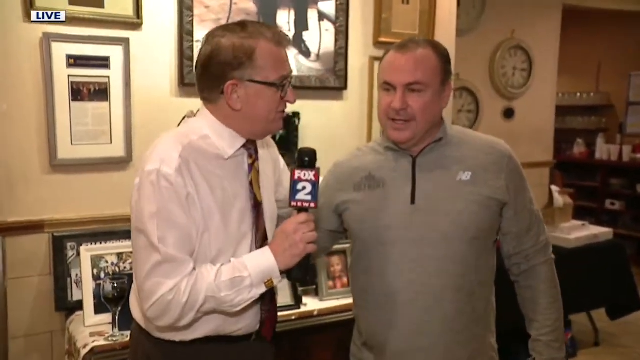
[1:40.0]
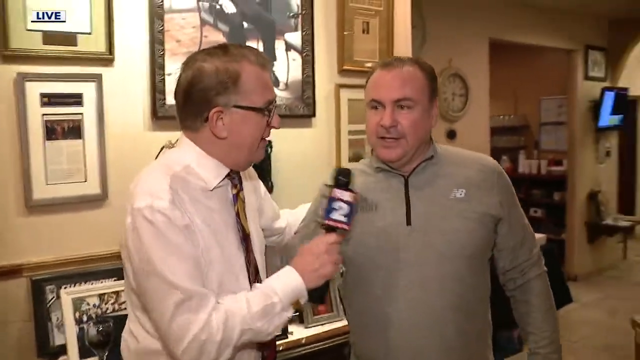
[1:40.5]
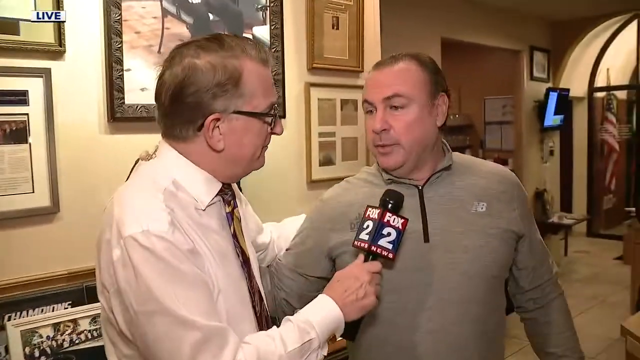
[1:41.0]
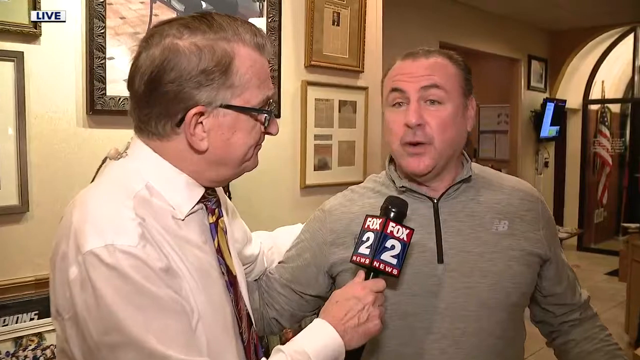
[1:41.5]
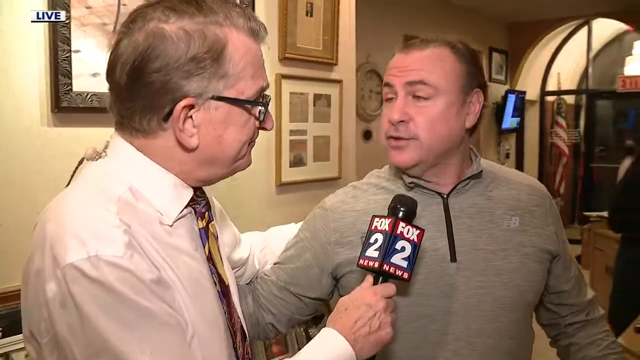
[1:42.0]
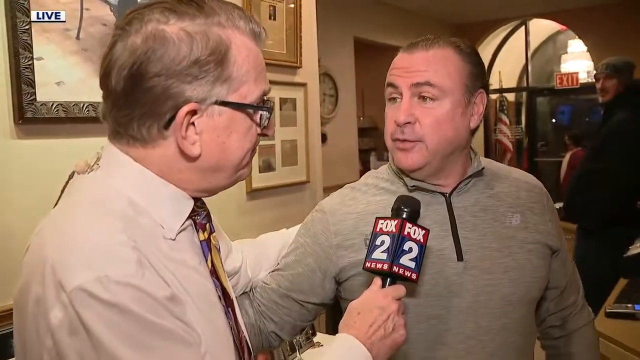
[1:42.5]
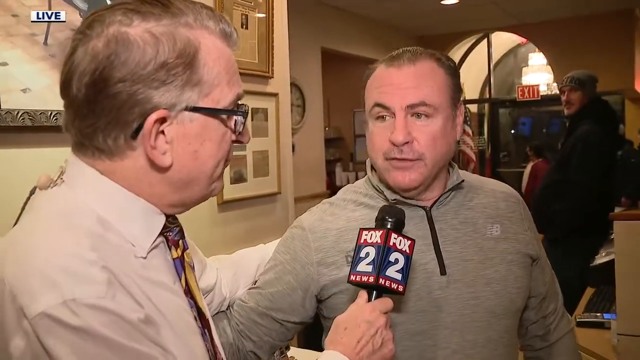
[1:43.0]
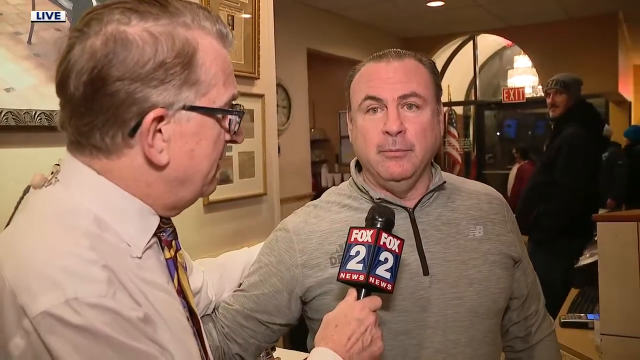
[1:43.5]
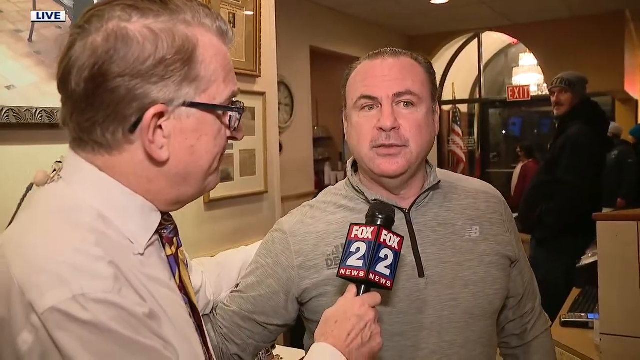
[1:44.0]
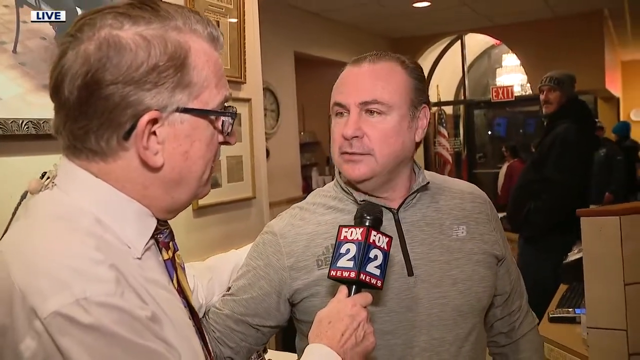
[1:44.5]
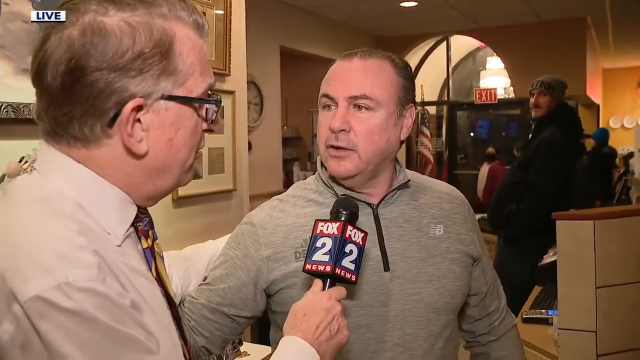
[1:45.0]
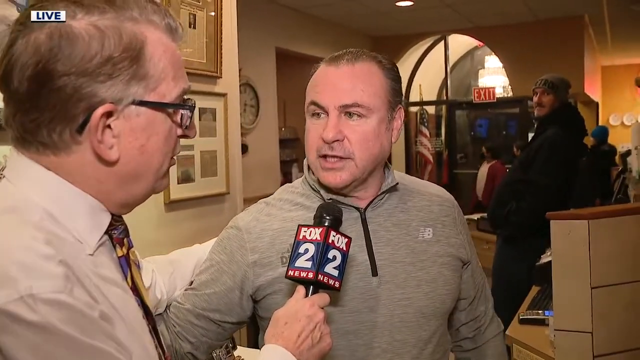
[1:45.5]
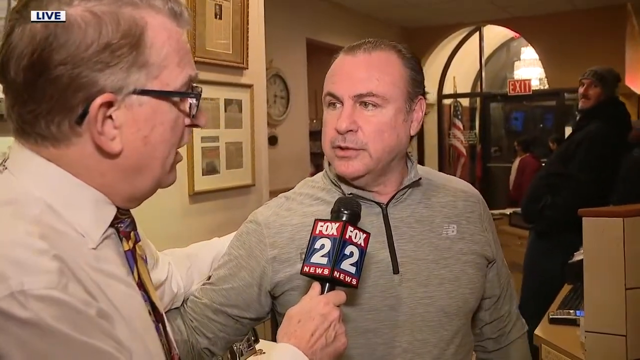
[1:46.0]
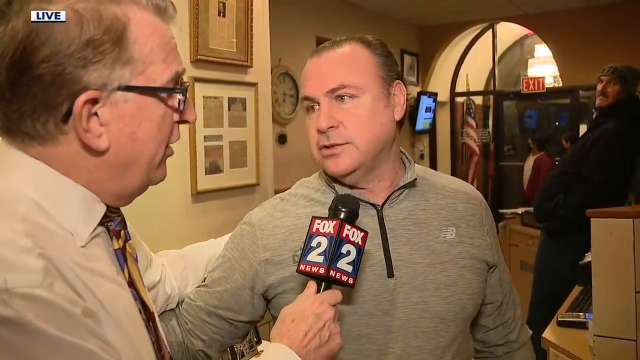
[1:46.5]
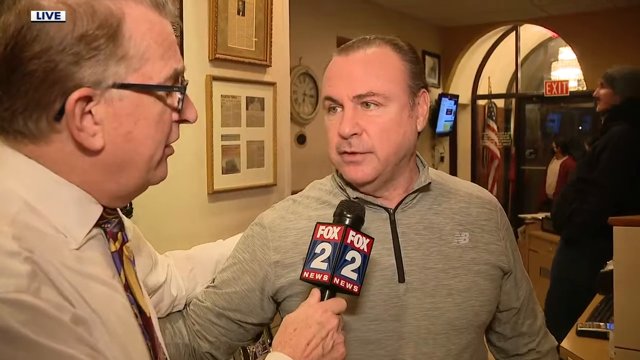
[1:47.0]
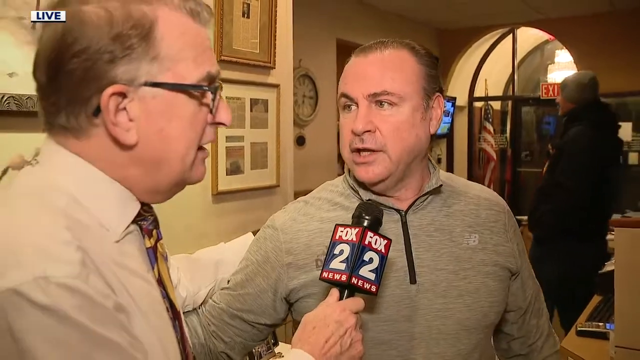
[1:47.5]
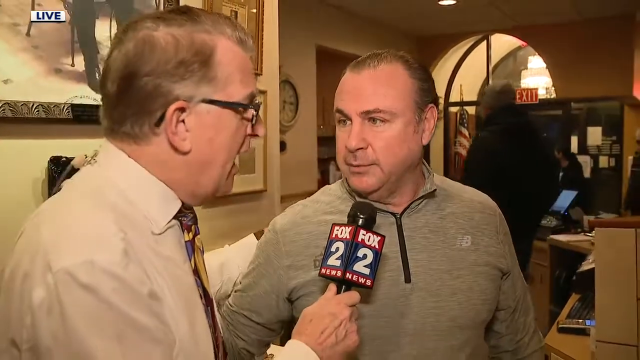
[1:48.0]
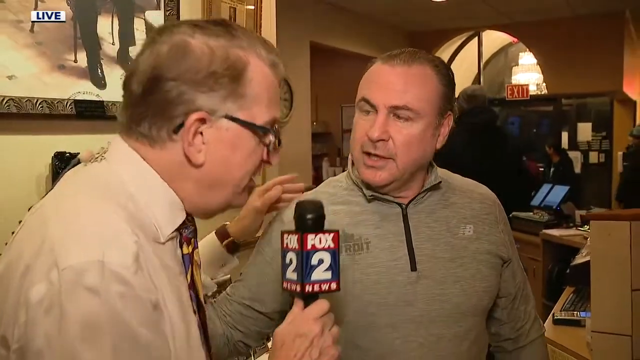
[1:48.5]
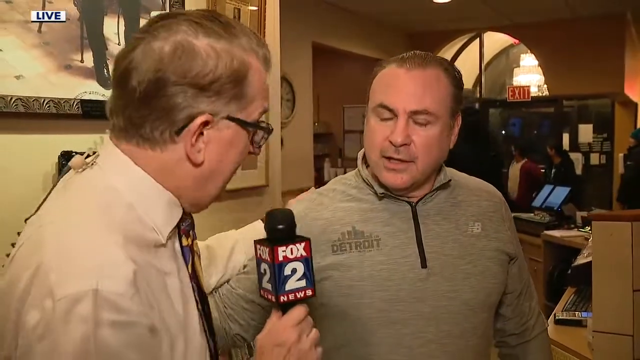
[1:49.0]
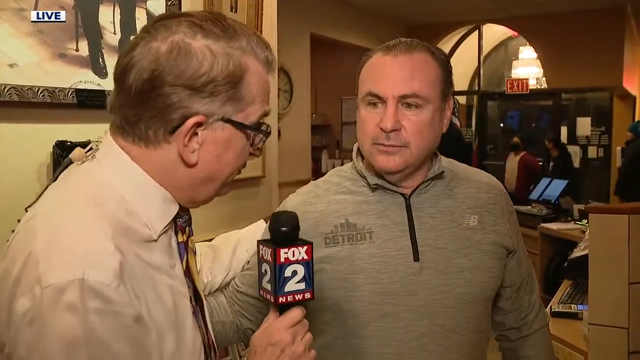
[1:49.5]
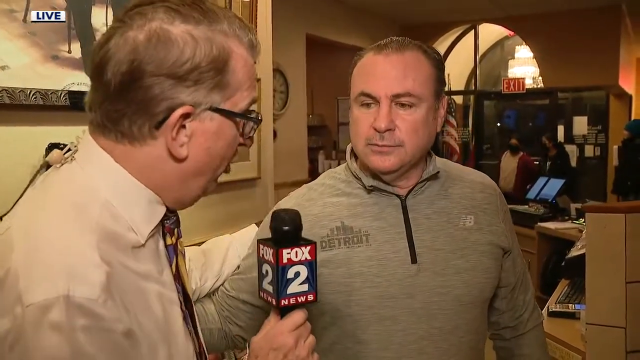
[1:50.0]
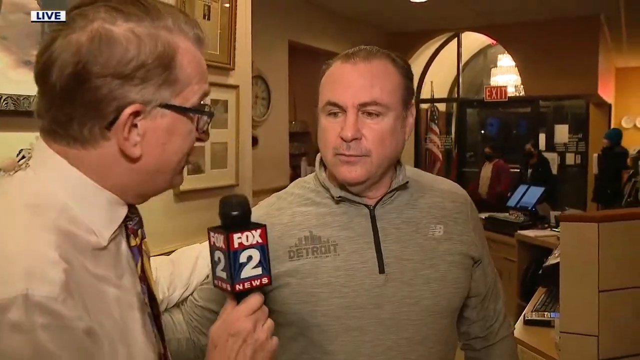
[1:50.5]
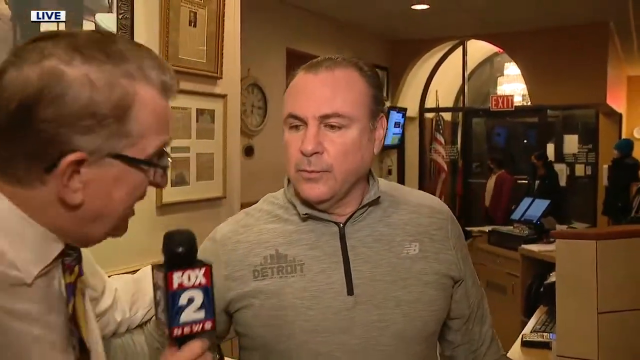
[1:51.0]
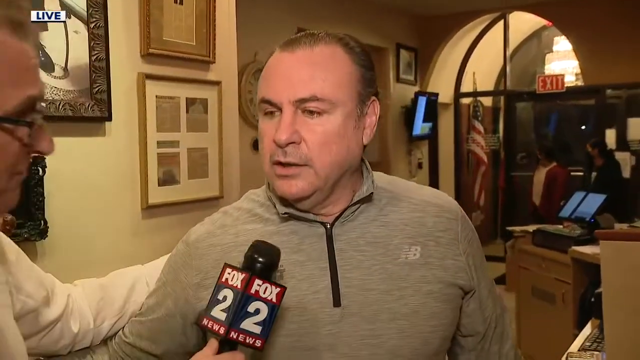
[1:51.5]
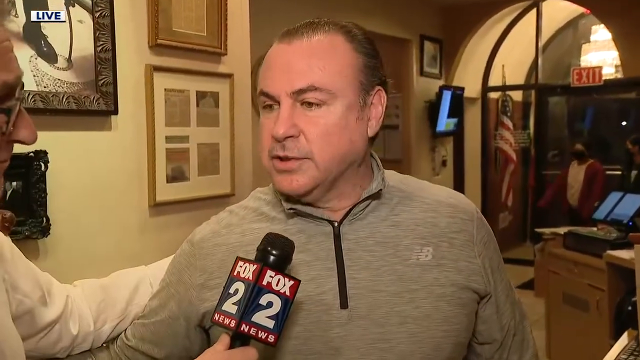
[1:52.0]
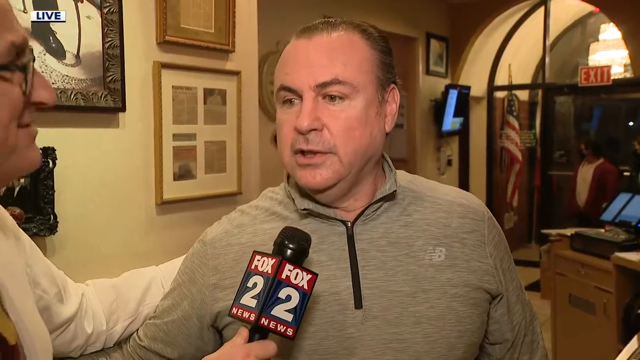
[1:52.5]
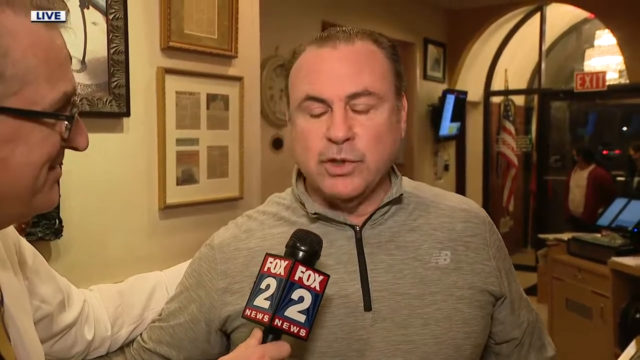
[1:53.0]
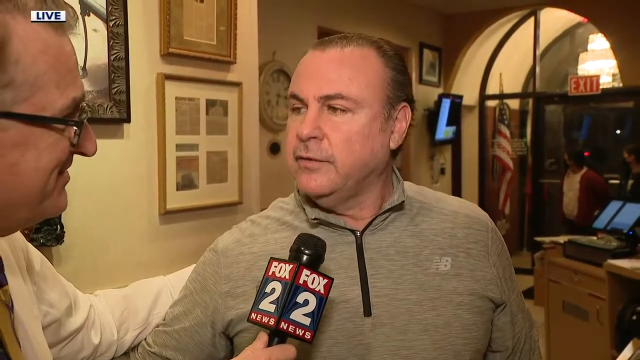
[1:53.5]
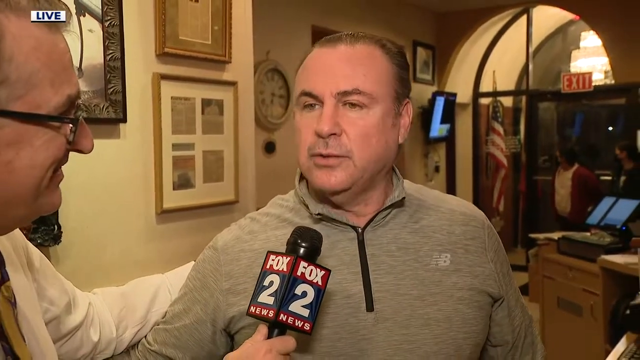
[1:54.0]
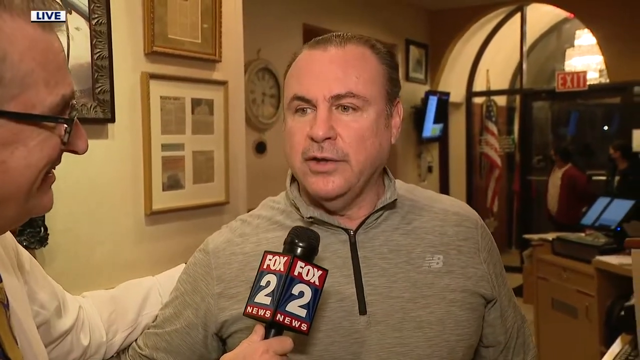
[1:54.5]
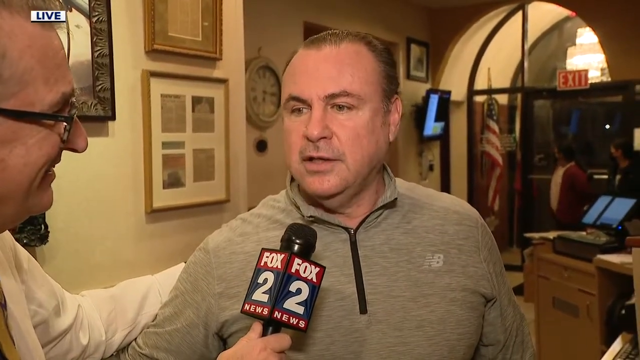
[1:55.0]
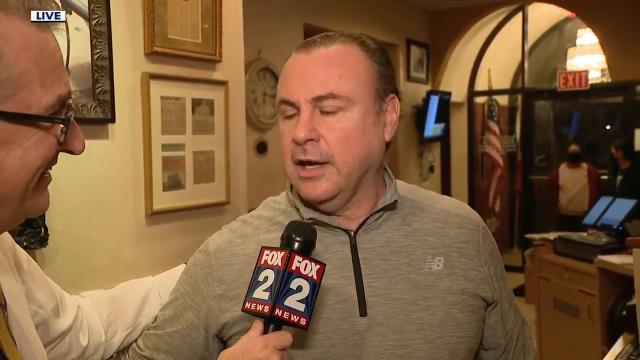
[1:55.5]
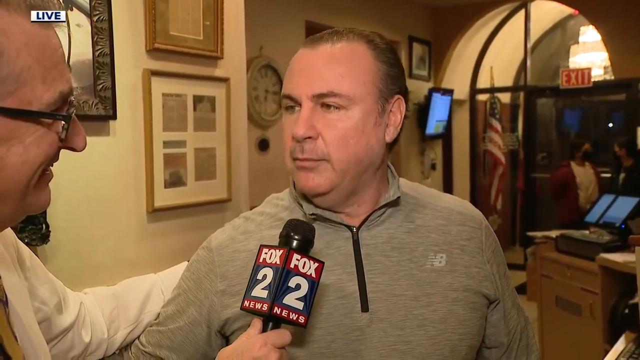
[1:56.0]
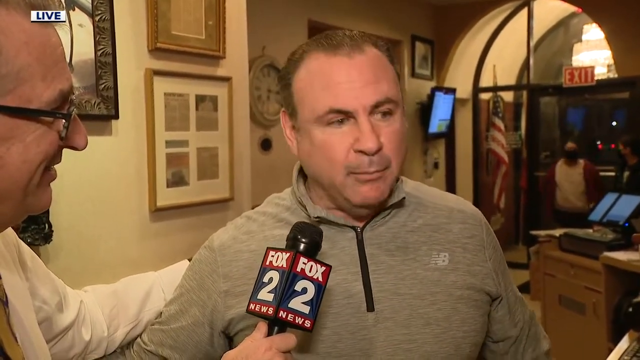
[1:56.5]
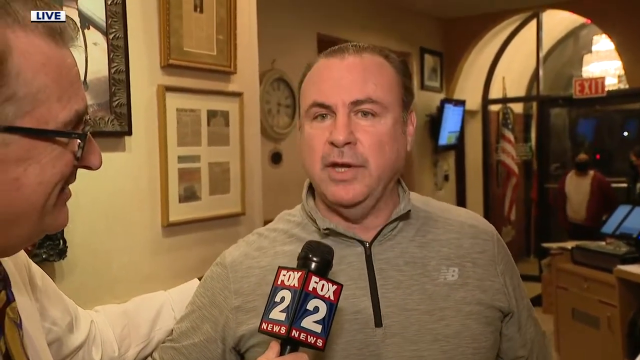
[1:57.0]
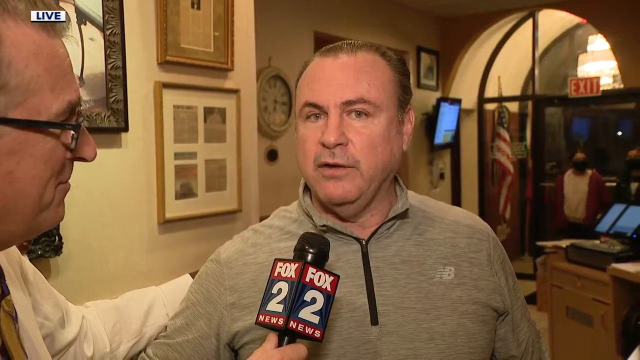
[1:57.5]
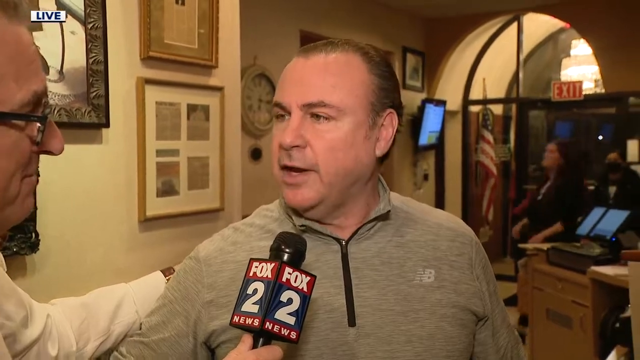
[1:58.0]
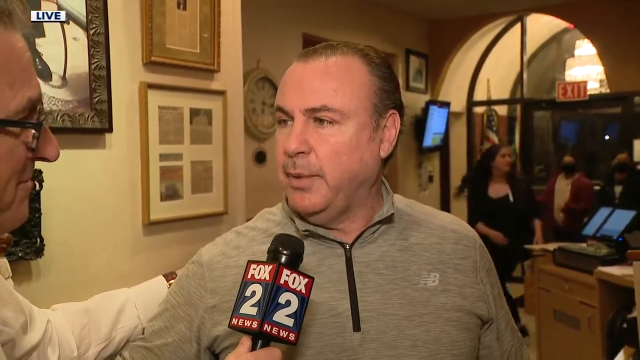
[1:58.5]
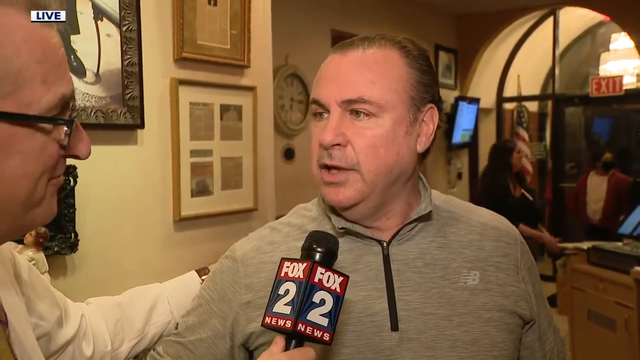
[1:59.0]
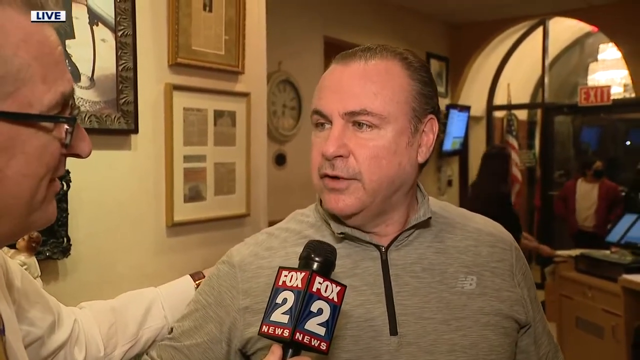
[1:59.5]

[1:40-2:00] The owner answers, looking back and forth between the reporter and the camera. In the background are an American flag and a person, either a guest or someone bundled up in a jacket and hat, looking at the camera. A monitor and a register are visible, along with photographs in picture frames behind the owner and a clock on the wall that looks like it says about 6:15 p.m. A female staff worker, the hostess, returns to the hostess stand, coming around back to the counter. Behind the reporter and the owner are old-fashioned pictures in frames; one hanging on the wall on the left side is a small black-and-white photo with text on the bottom that looks like something out of a newspaper clipping.